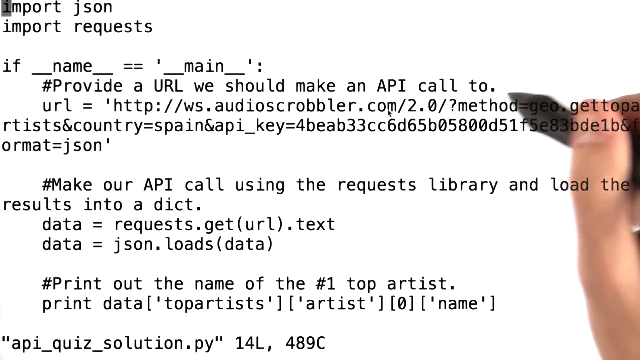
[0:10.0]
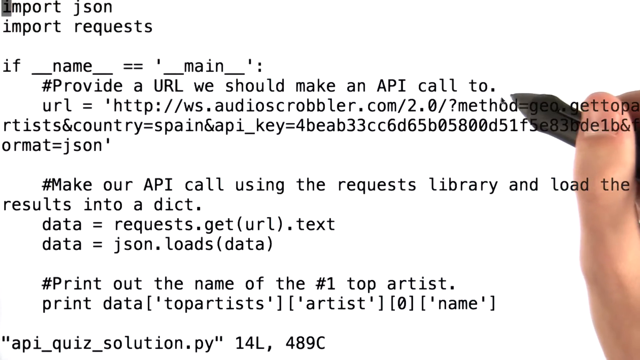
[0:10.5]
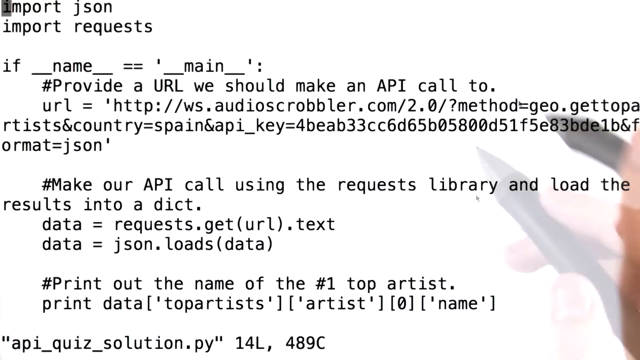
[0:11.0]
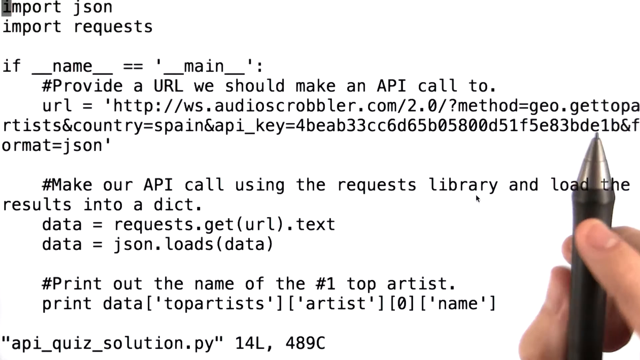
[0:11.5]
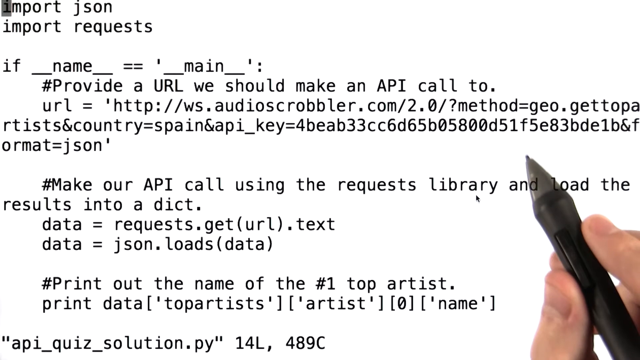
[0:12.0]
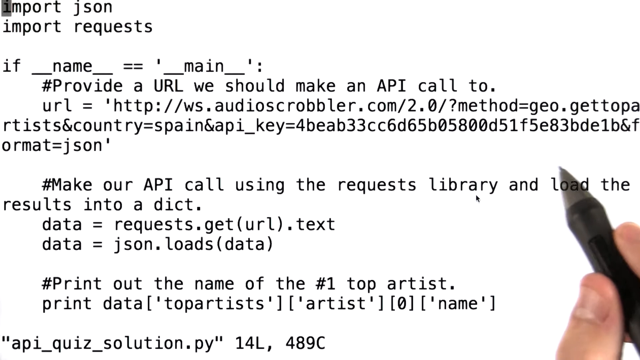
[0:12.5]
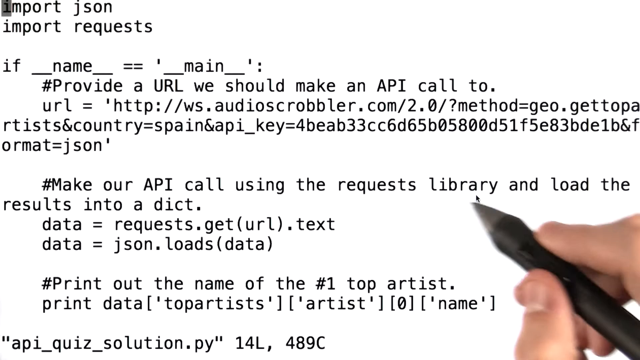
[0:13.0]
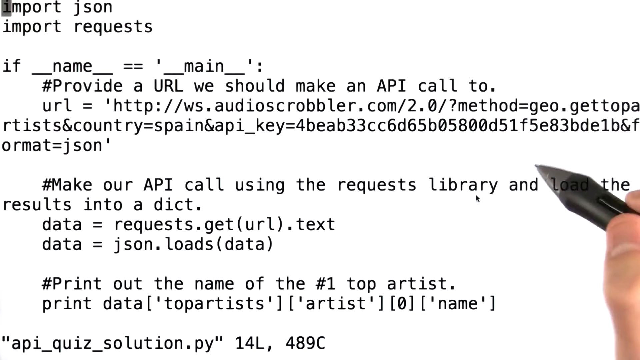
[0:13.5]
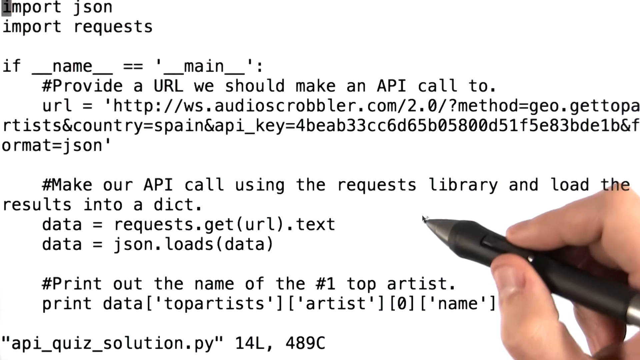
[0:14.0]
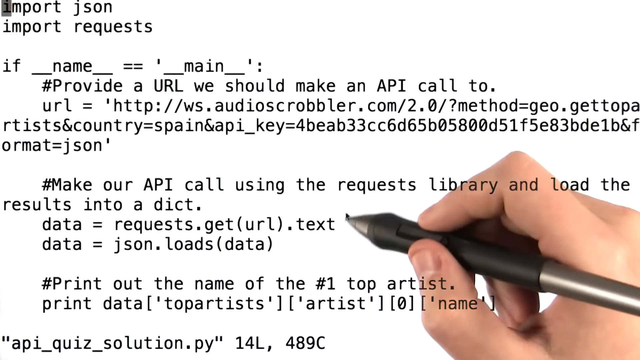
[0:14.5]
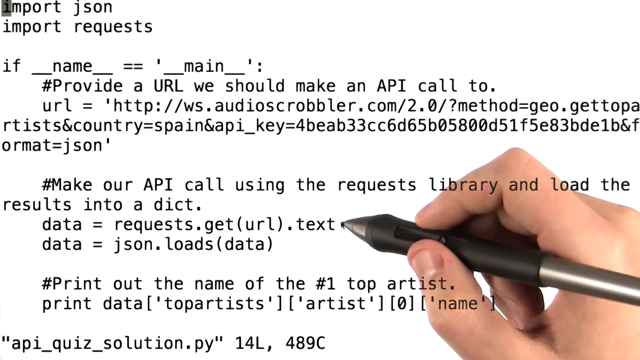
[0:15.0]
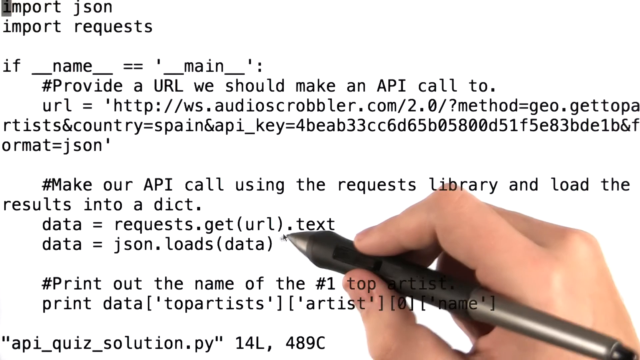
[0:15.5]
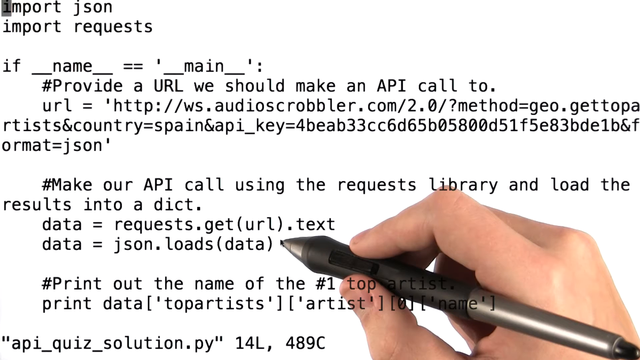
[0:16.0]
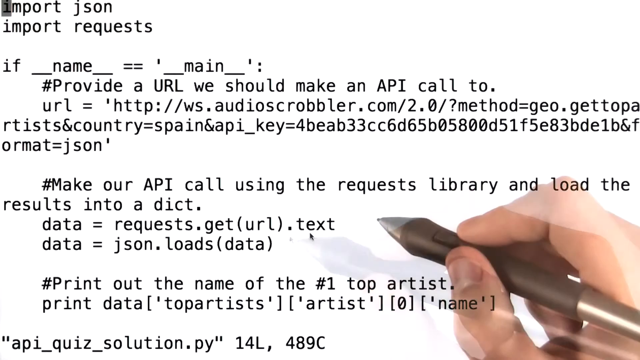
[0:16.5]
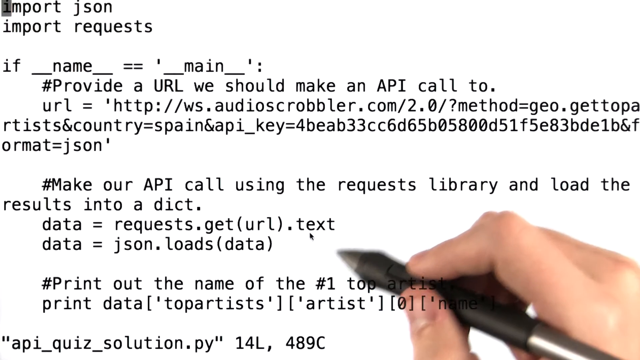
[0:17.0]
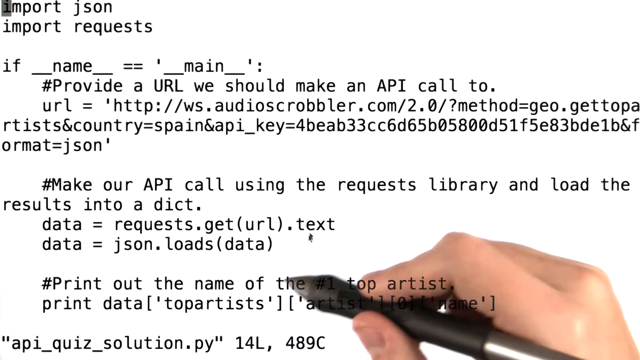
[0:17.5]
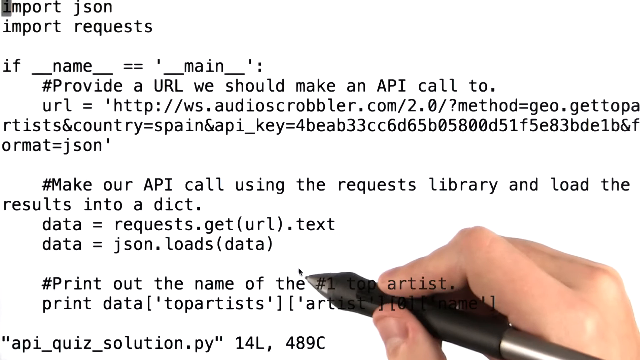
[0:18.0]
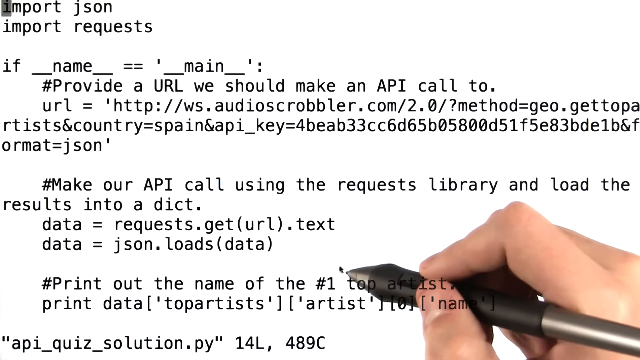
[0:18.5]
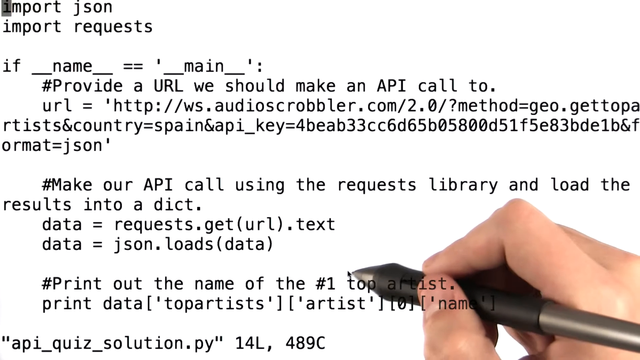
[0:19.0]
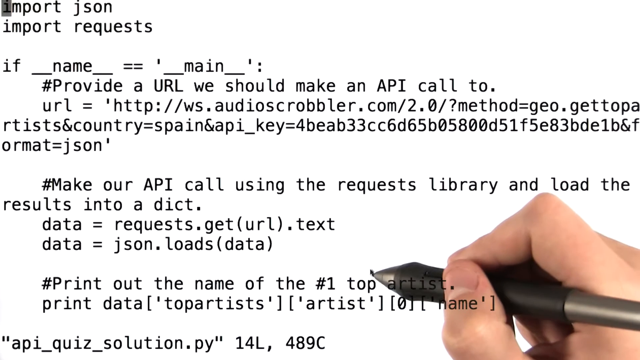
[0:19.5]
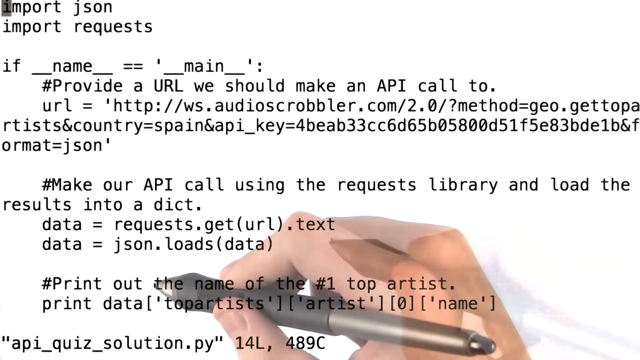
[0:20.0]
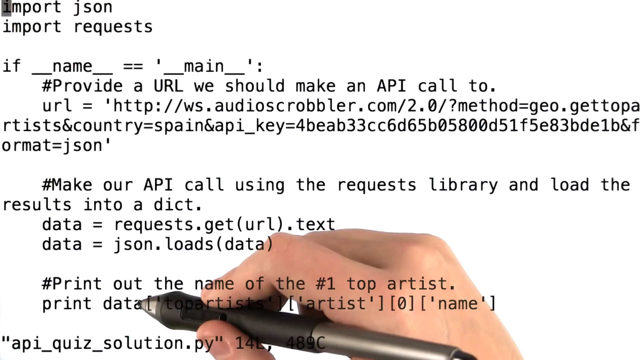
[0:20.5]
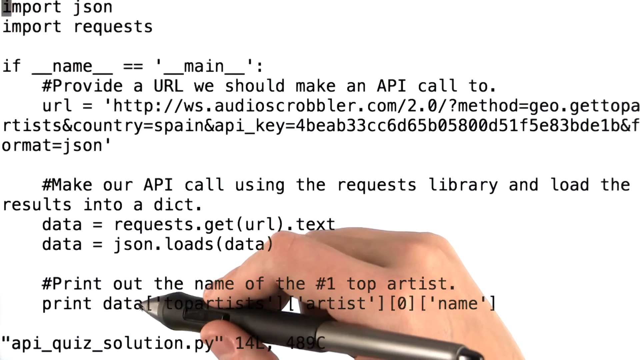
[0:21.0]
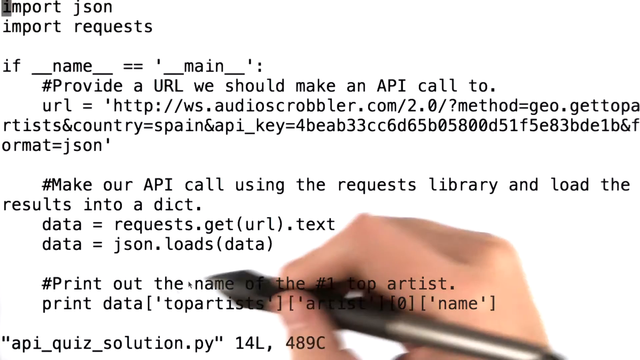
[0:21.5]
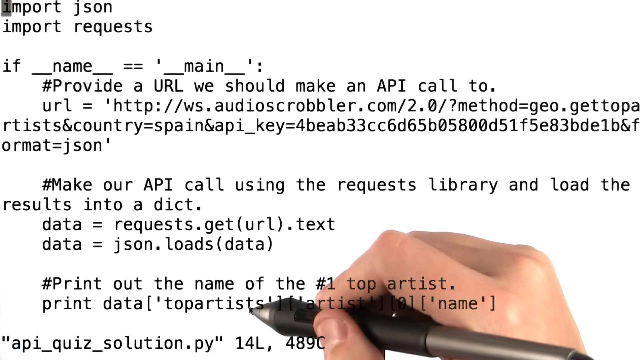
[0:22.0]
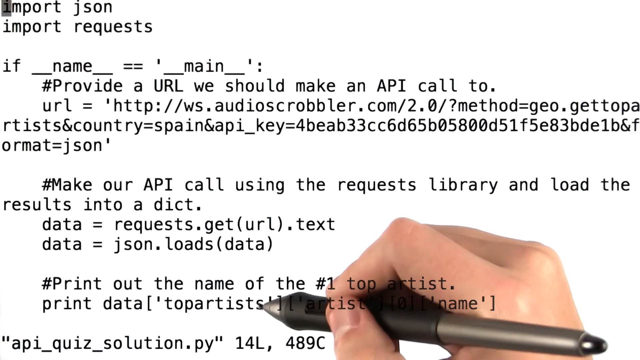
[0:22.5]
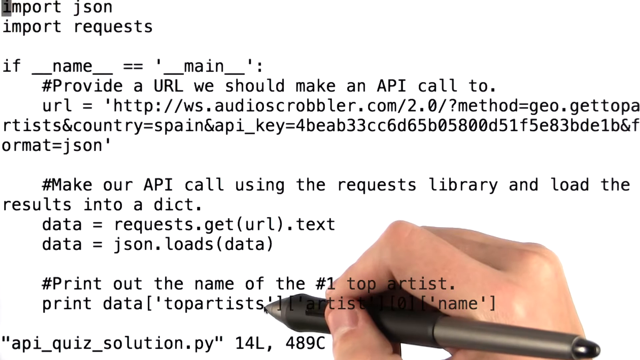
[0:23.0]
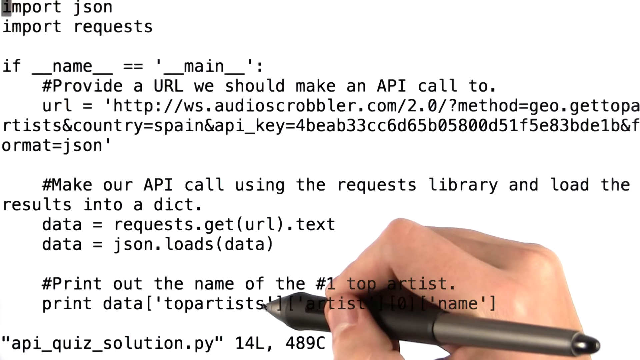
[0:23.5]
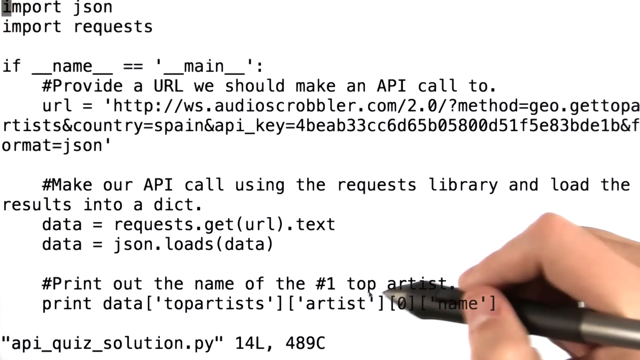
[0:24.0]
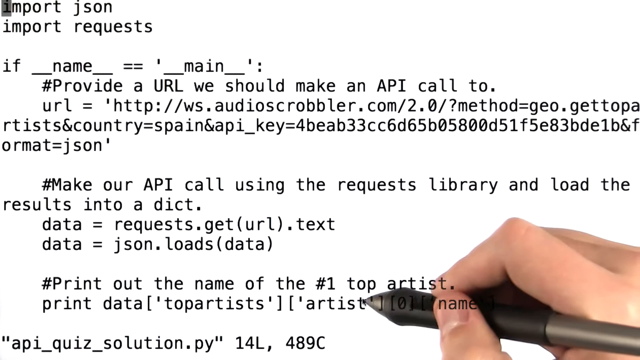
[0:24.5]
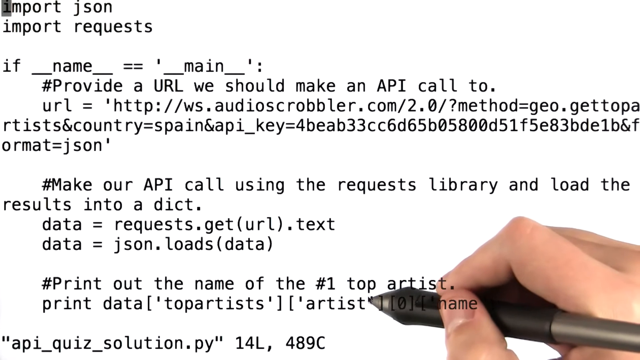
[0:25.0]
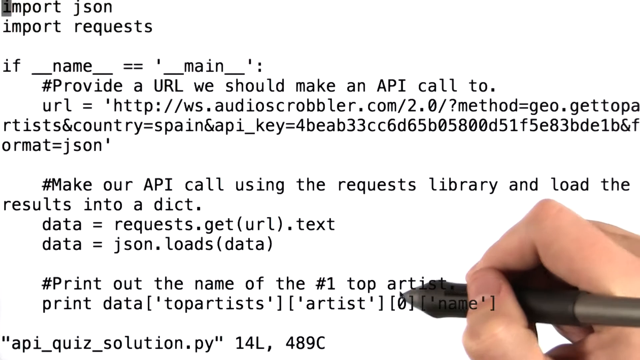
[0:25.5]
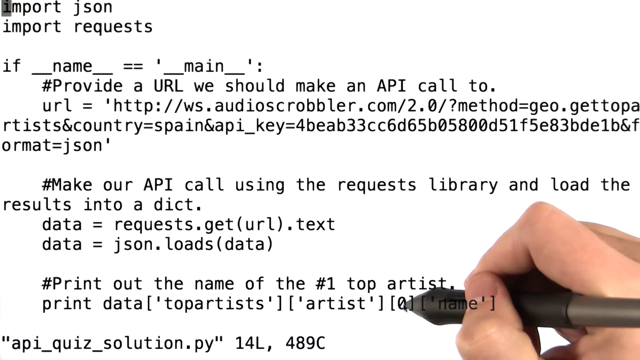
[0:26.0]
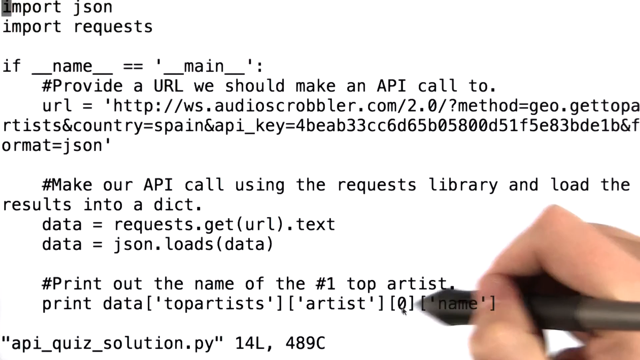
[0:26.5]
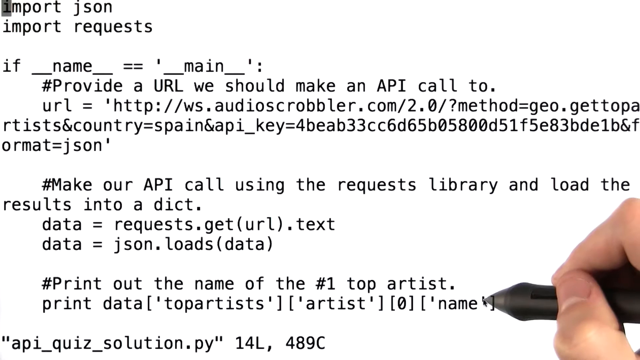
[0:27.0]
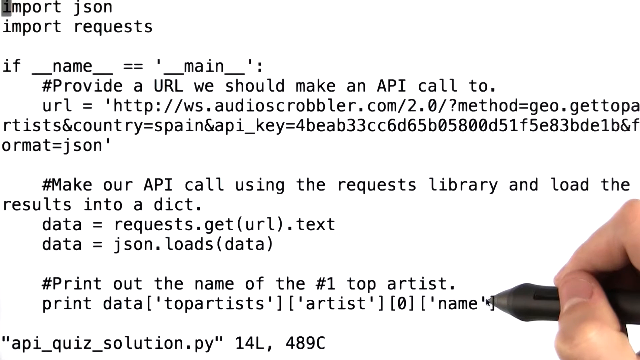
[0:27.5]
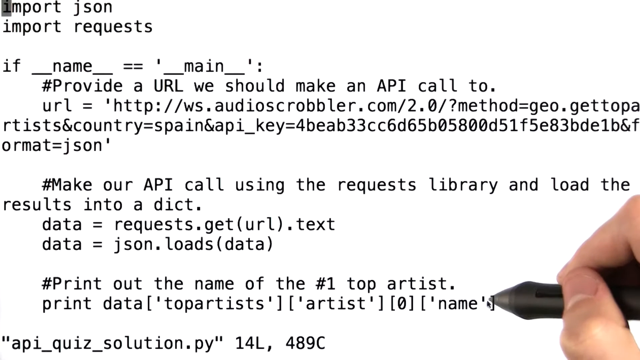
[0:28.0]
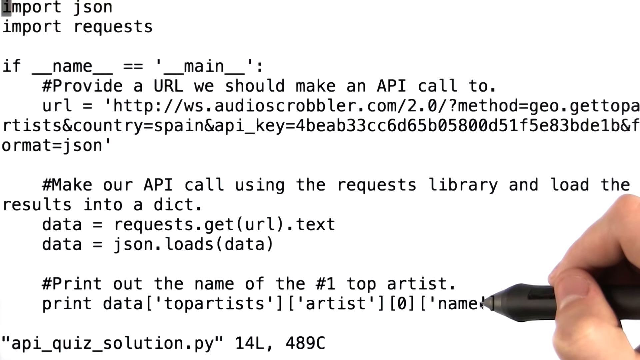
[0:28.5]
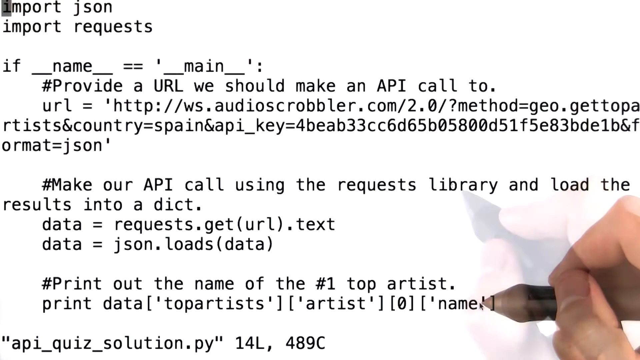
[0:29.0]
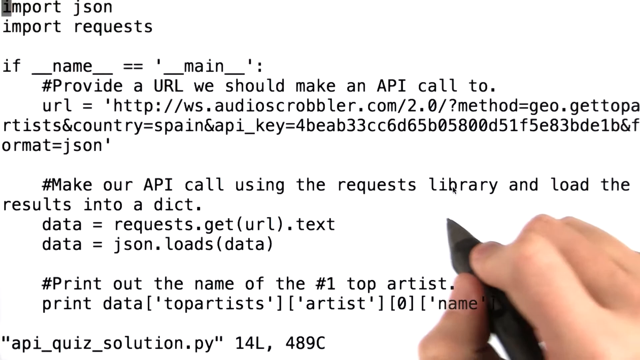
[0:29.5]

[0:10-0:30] The hand uses a black pen, pointing at the whiteboard while writing in black. The text forms a list that includes "make our API call", "query", "load", "import", "JSON" and "request". The hand keeps moving and pointing, and the pen leaves dots that fade away. Further text includes "print out the name of the", "top artist" and "artist name". The colors used are black and white. The written code seems to cover loading data, printing, using a library, storing results and making API calls.